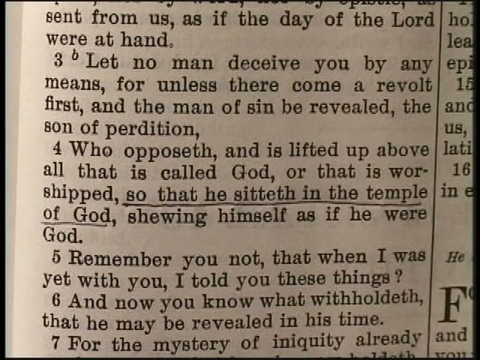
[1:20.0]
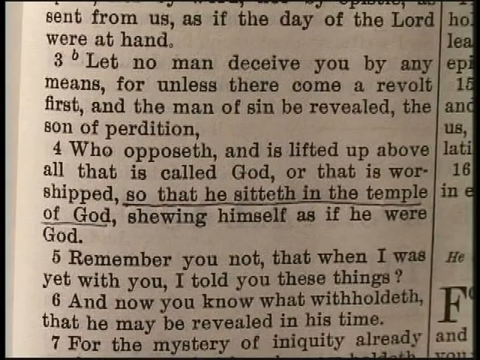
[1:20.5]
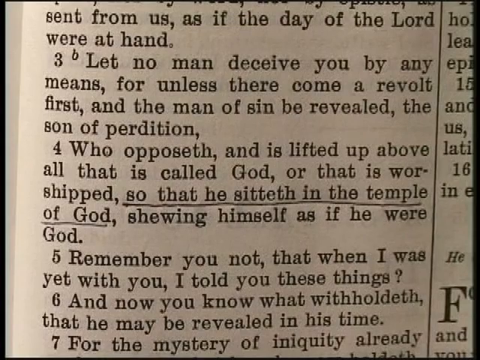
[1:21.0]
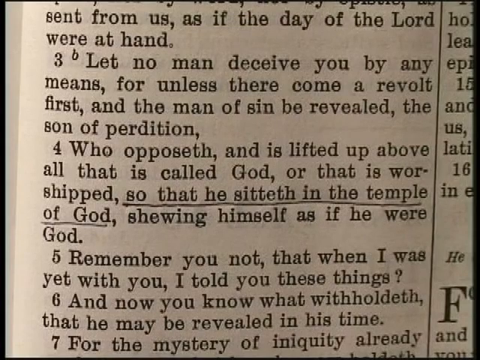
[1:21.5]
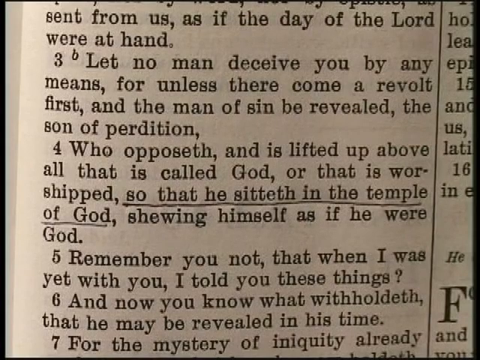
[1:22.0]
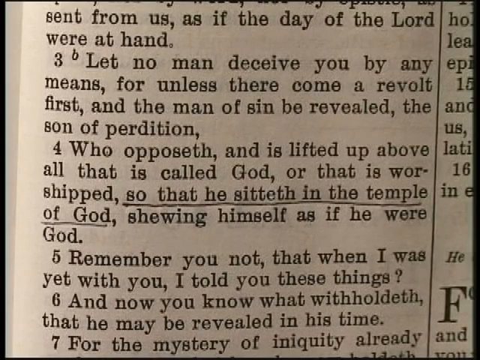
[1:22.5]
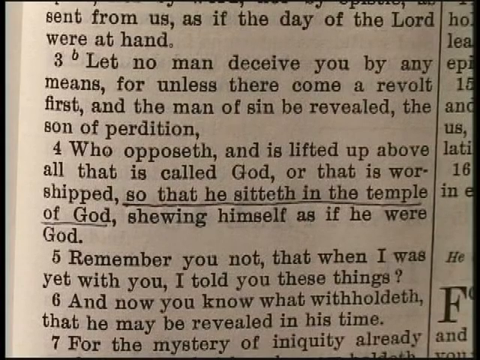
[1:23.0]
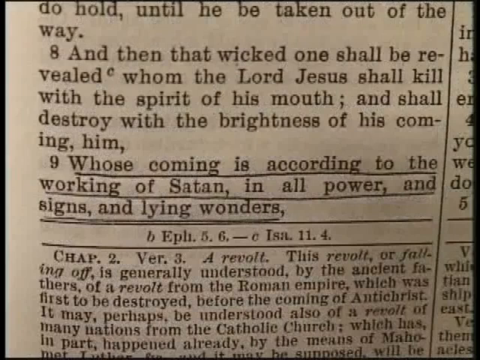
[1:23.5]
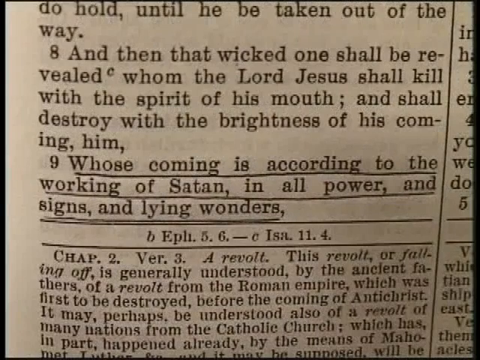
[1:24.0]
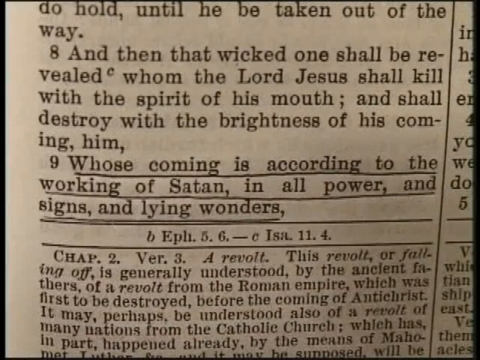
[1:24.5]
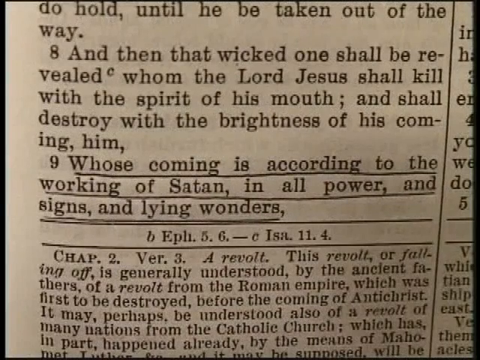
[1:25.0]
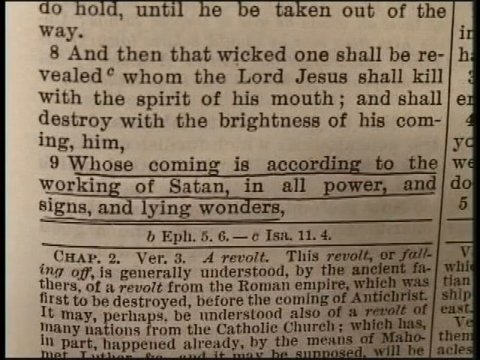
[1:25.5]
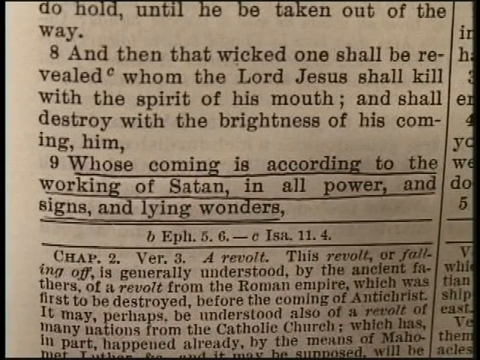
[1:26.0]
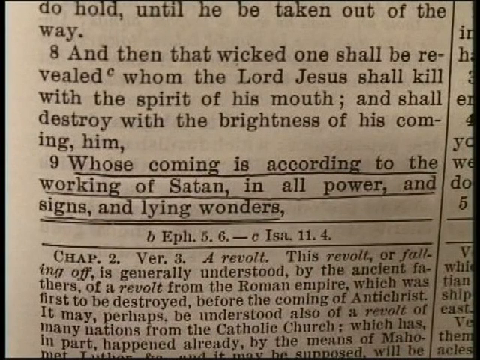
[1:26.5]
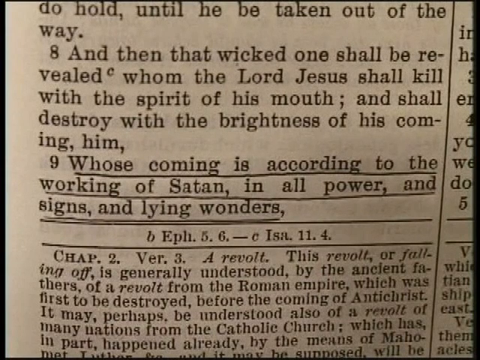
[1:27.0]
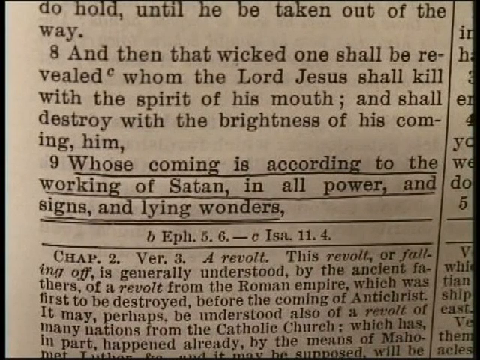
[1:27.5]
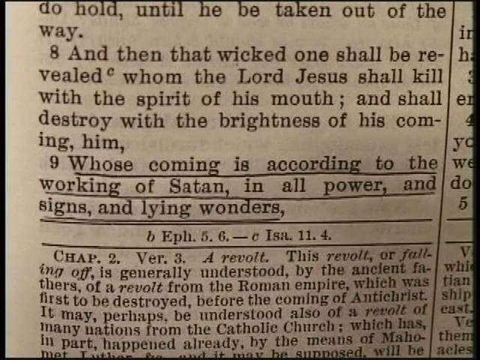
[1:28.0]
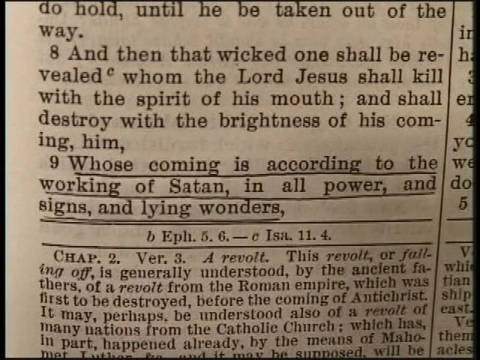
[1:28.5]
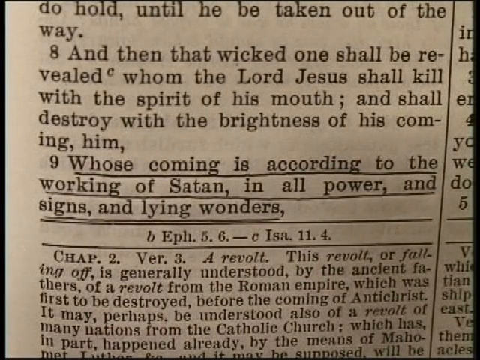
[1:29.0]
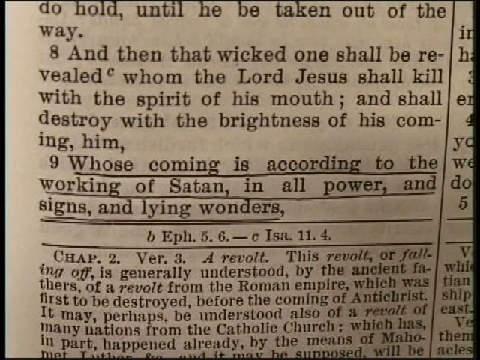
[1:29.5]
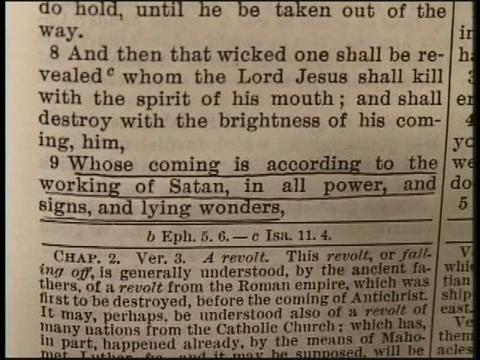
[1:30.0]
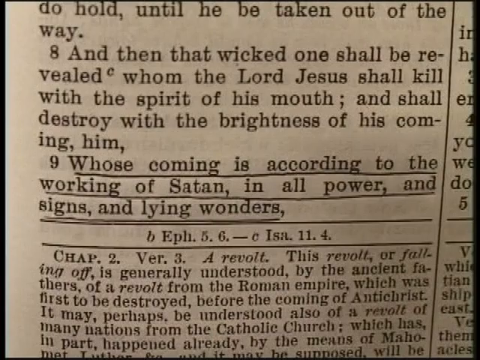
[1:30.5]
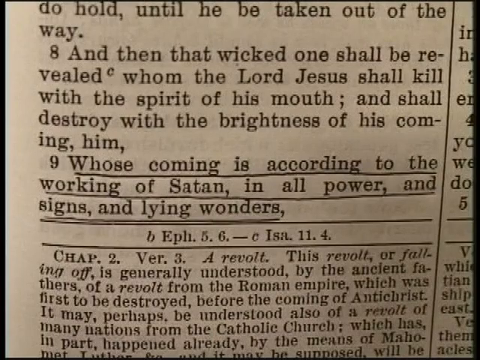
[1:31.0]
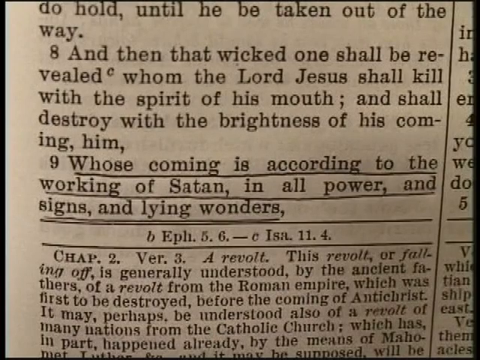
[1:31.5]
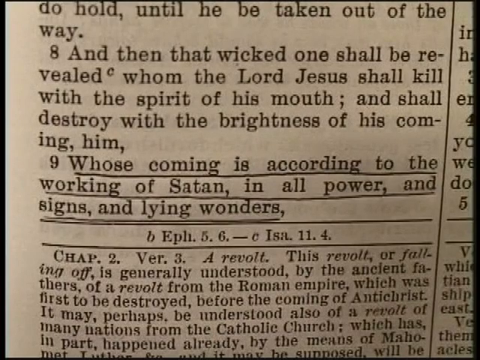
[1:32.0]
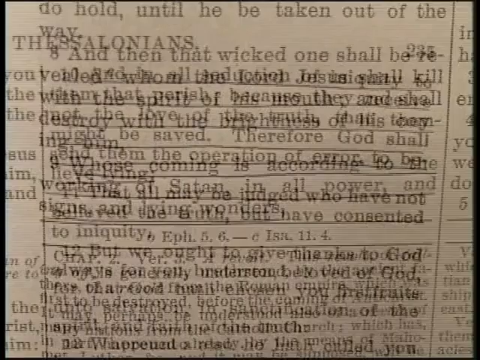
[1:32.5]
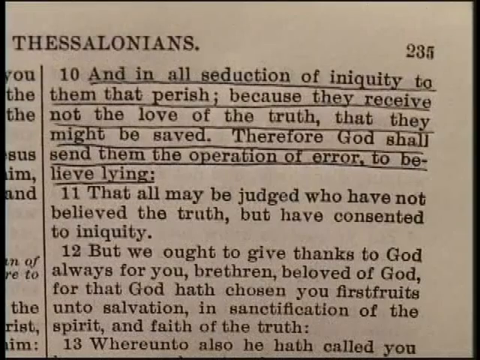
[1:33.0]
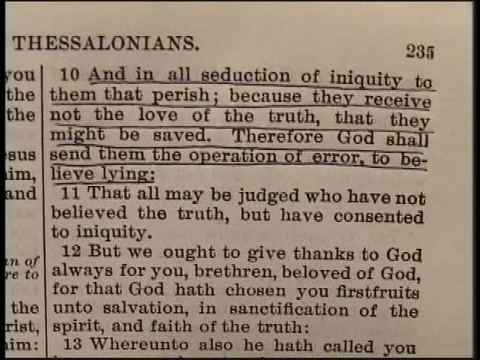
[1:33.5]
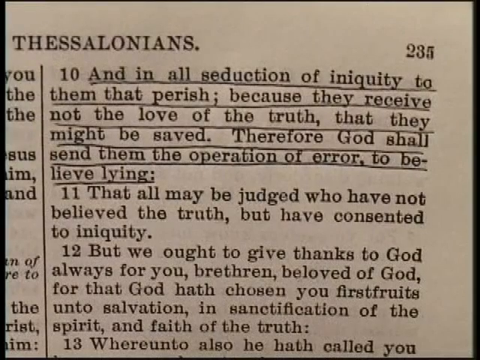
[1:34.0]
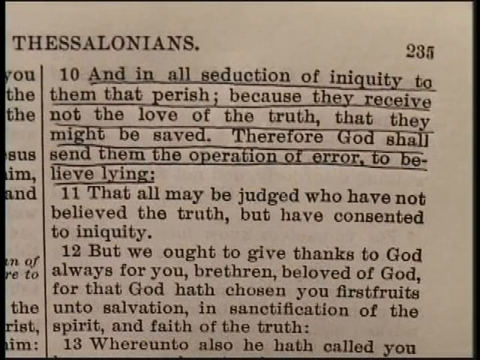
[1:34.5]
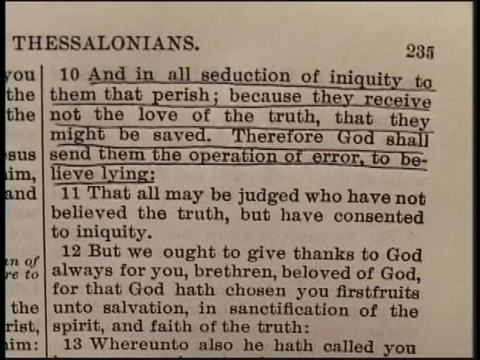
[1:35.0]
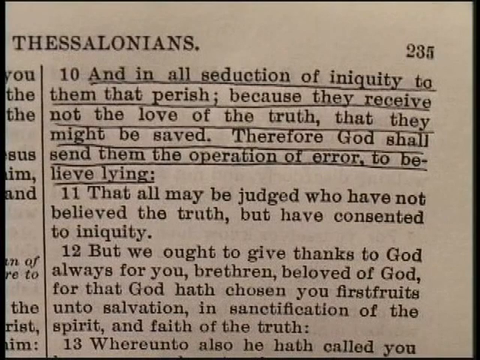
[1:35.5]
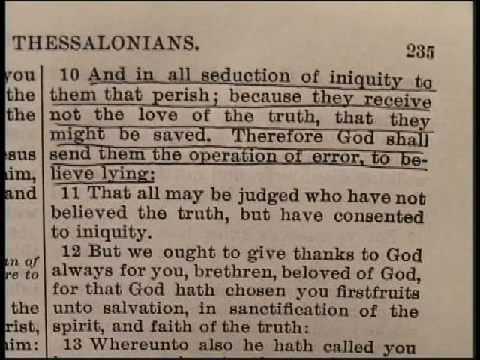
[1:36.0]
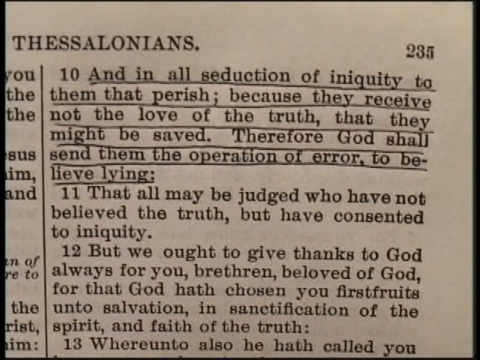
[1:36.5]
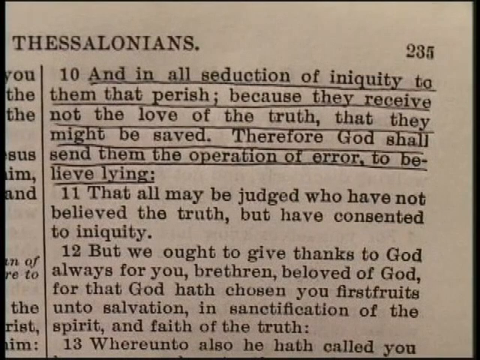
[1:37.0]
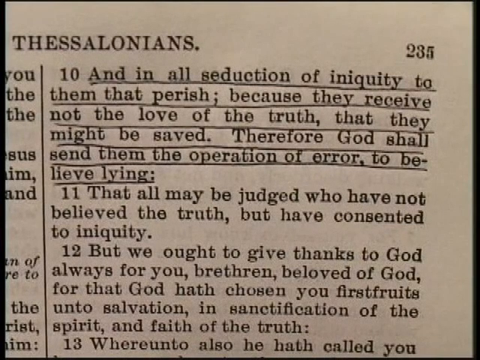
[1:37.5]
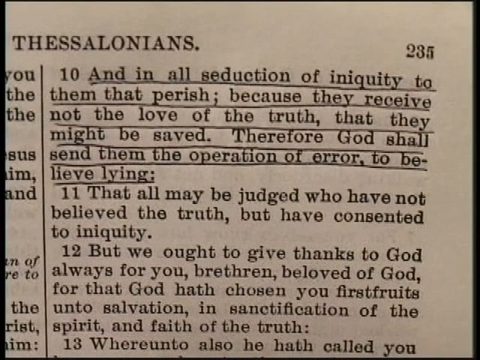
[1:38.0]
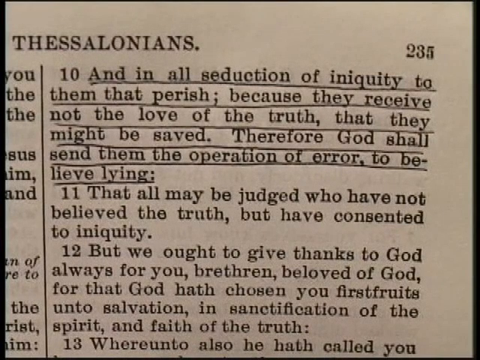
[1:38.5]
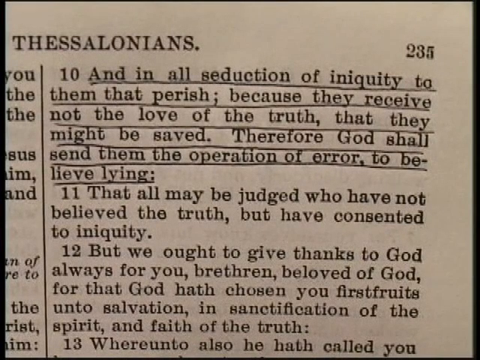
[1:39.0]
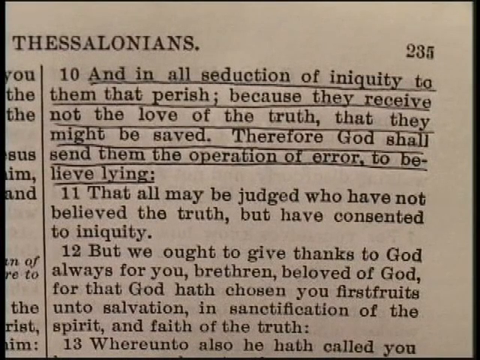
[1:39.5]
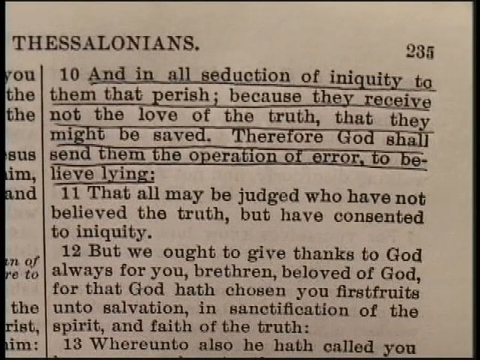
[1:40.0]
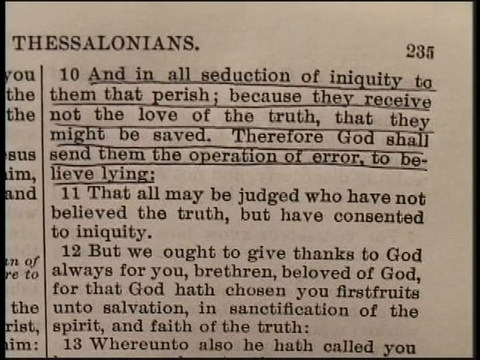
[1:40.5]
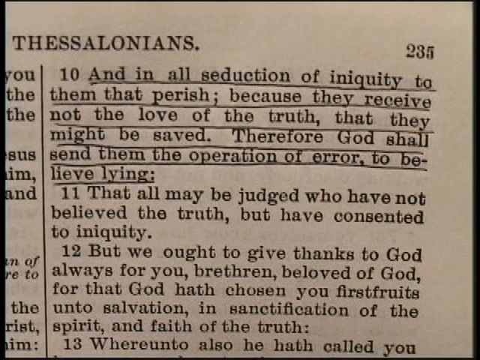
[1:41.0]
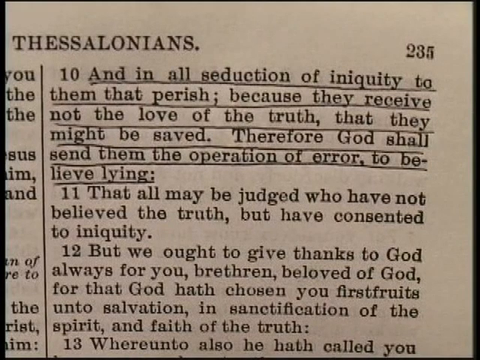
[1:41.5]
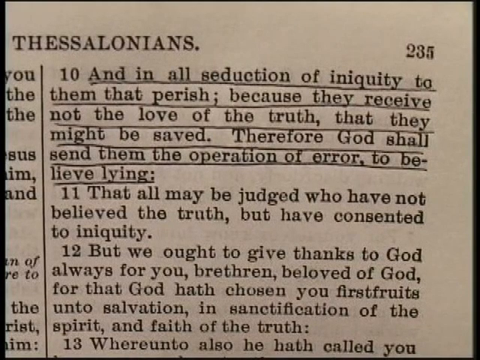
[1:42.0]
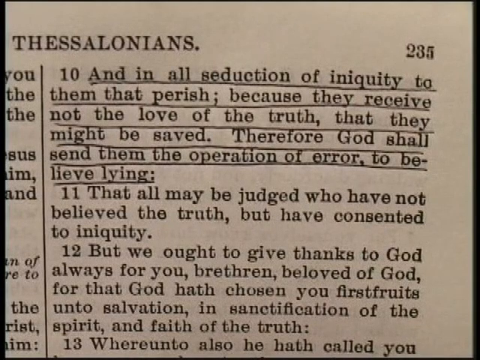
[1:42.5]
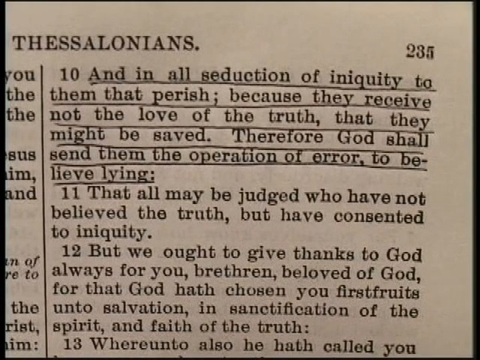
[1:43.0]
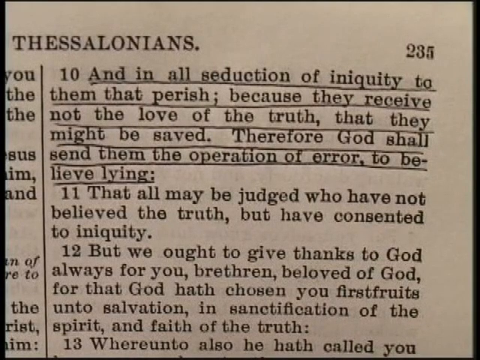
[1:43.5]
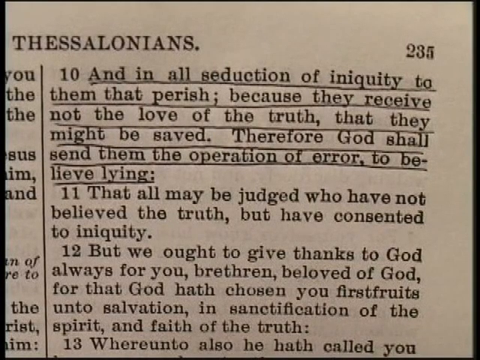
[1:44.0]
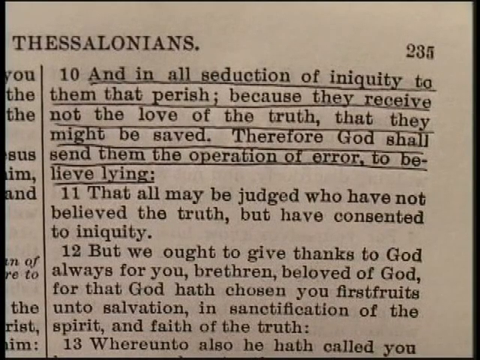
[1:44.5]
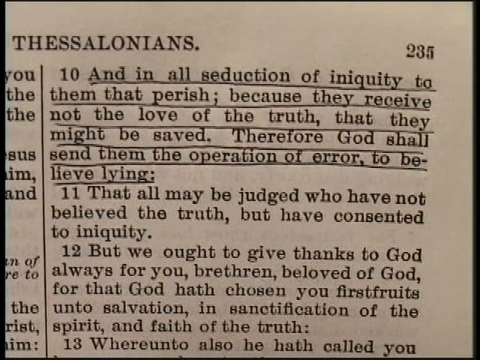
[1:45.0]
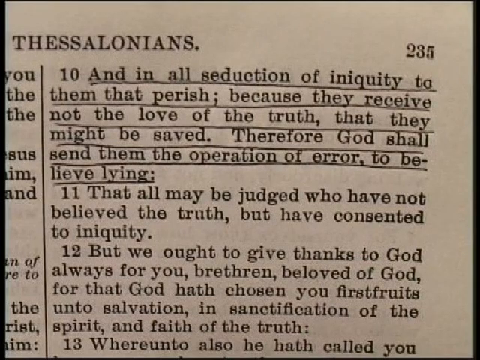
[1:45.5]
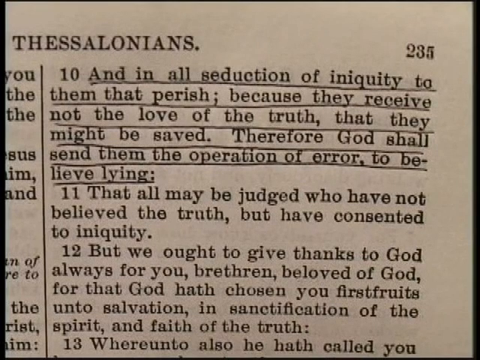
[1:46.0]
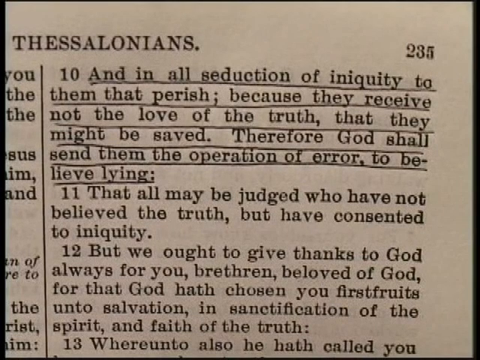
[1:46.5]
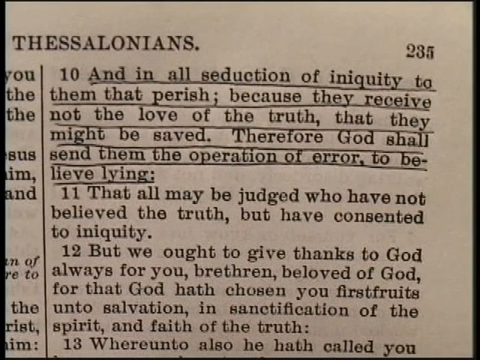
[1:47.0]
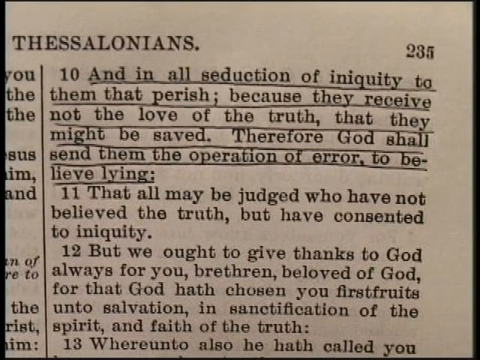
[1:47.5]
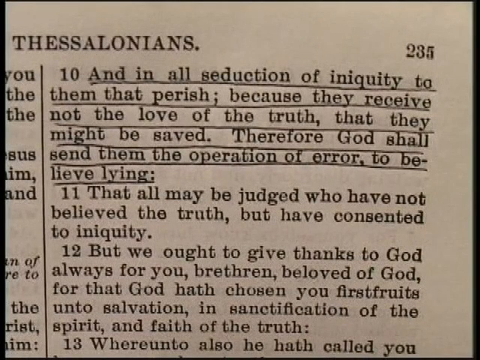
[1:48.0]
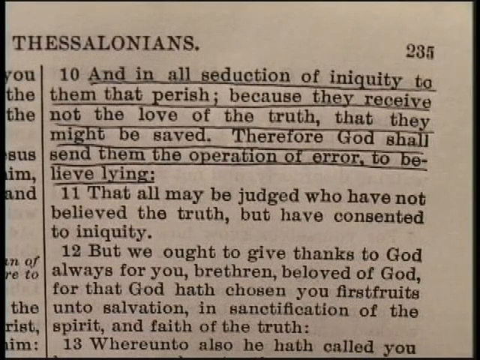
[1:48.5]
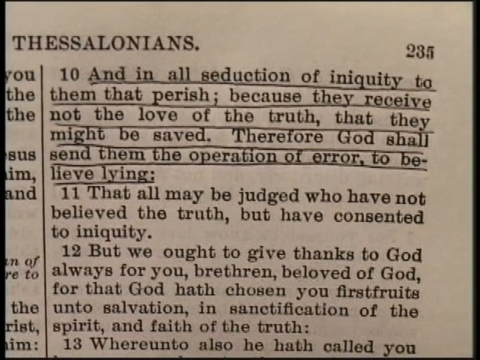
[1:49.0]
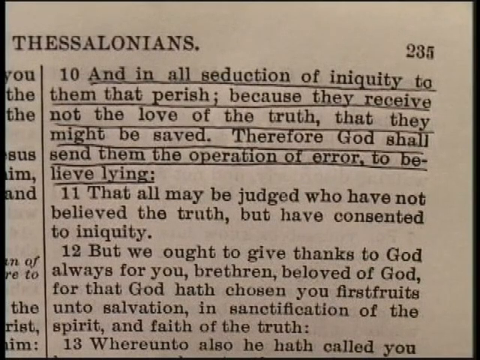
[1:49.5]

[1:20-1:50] A page of a book is shown, read from top to bottom: "Behold until he be taken out of the way." A paragraph numbered 8 reads "And then the wicked one shall be revealed," with a small c at the top of the writing, followed by "Whom the Lord Jesus shall kill with the sprit of his mouth;". Verse 9 is underlined in biro: "Whose coming is according to the working of Satan, in all power, and signs, and lying wonders". Below that are two lines, with "EPH 5.6.C-C ISA 11.4" between them, and "chapter 2" below that. The scene changes to a page of Thessalonians, with page number 235 at the top right, showing the end column; faint lines are visible. At the top, verse 10 is underlined in biro: "and in all seduction of iniquity to them that perish; because they receive not the love of the truth, that they might be saved. Therefore God shall send them the operation of error, to believe lying". Verse 11 reads "that all may be judged who have not believed the truth, but have consented to iniquity." Verse 12 begins "we ought to give thanks to God always for you, brethren, beloved to God". The rest of the page is not legible.